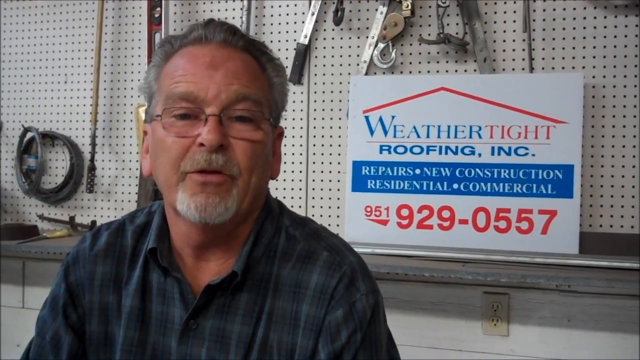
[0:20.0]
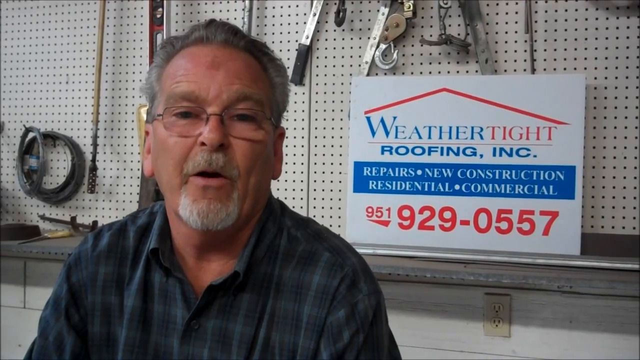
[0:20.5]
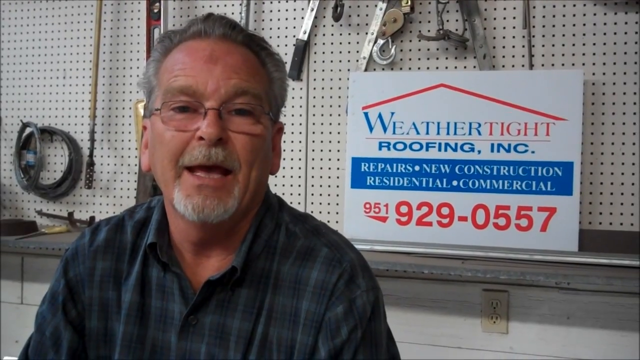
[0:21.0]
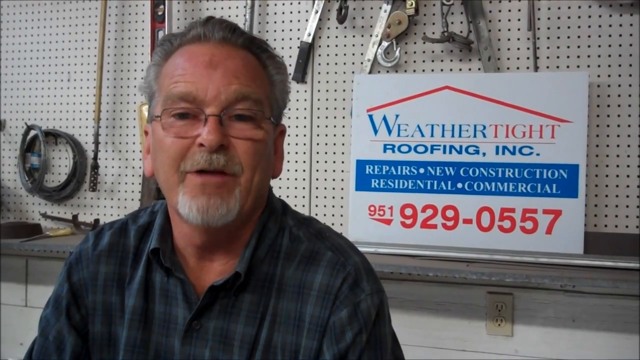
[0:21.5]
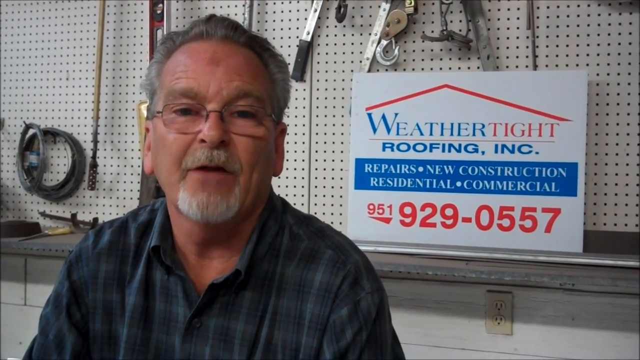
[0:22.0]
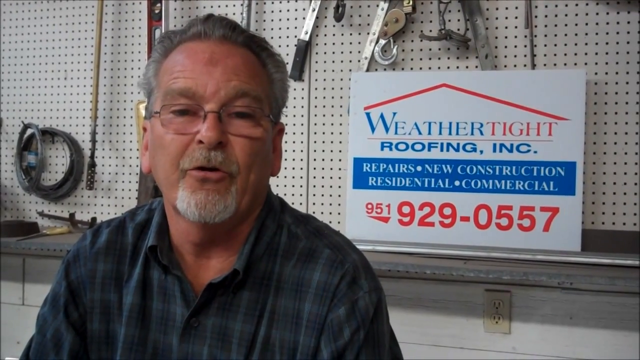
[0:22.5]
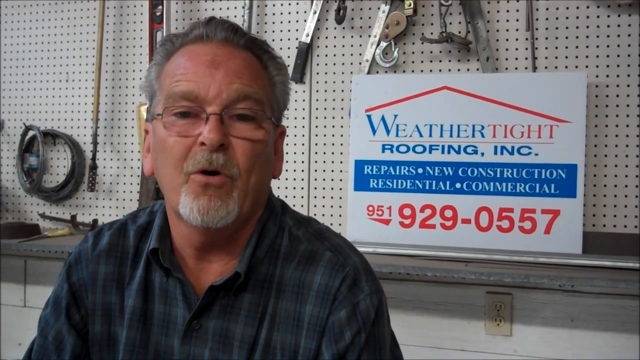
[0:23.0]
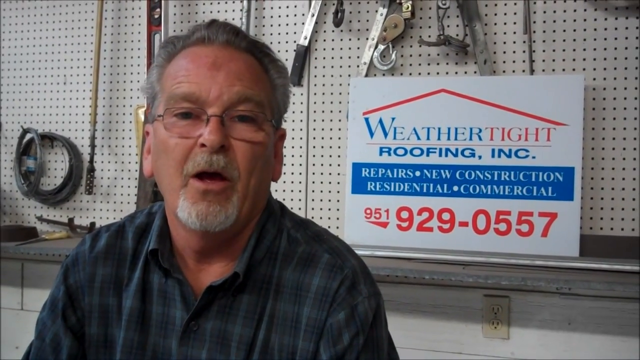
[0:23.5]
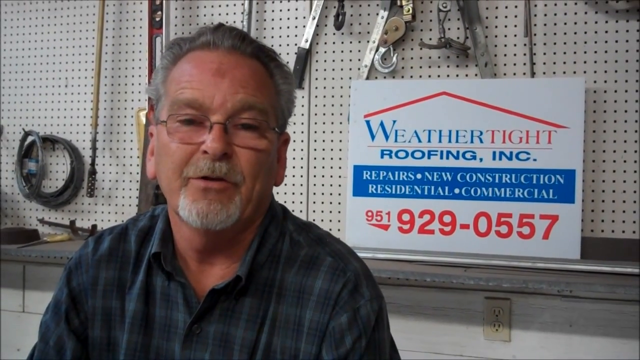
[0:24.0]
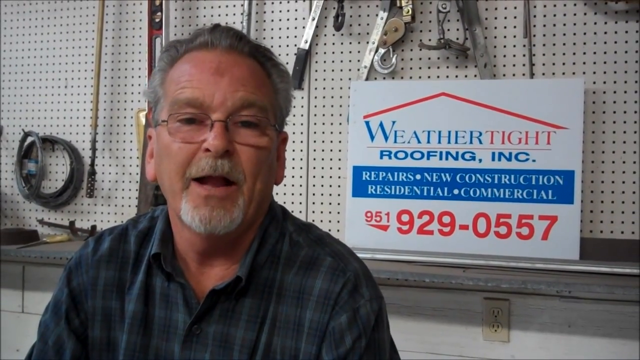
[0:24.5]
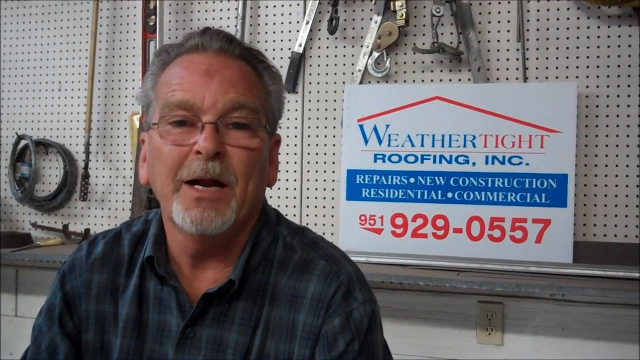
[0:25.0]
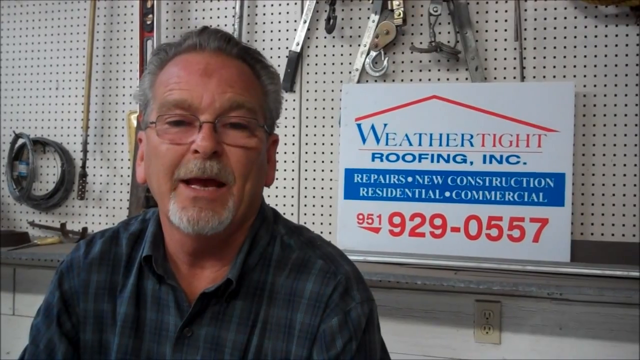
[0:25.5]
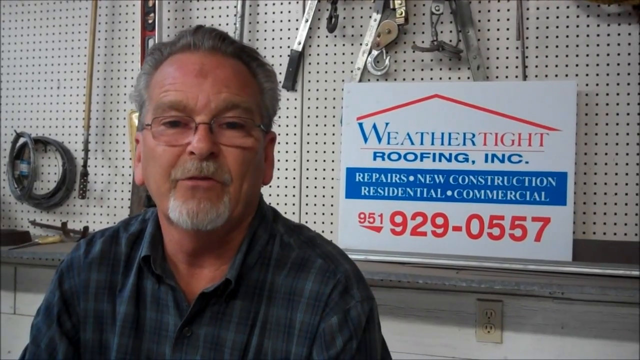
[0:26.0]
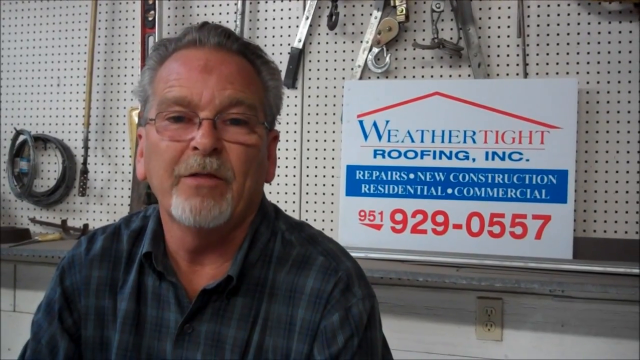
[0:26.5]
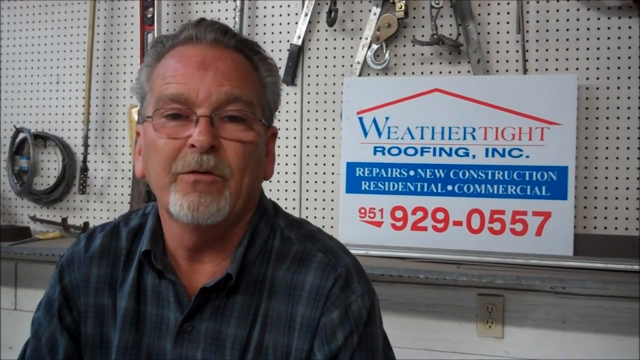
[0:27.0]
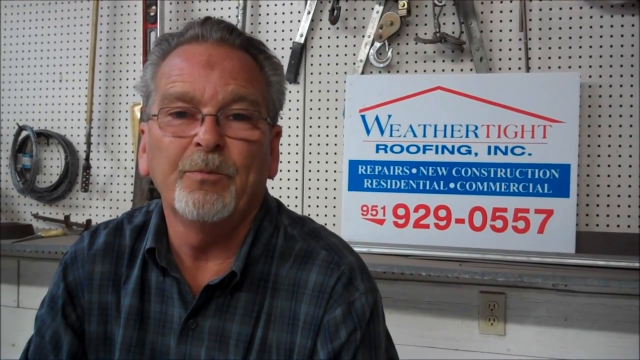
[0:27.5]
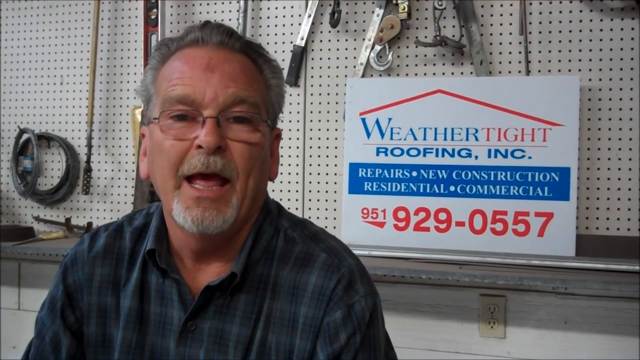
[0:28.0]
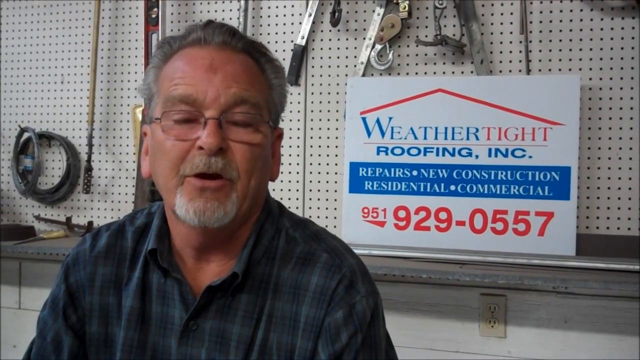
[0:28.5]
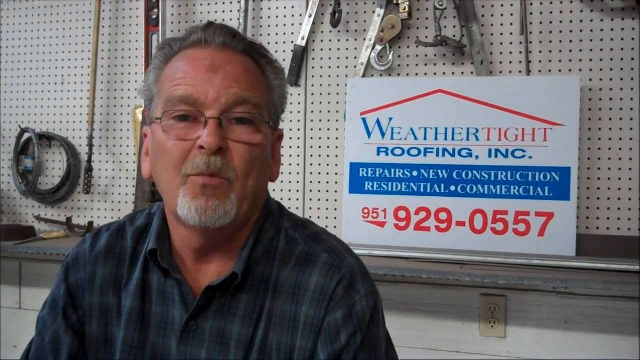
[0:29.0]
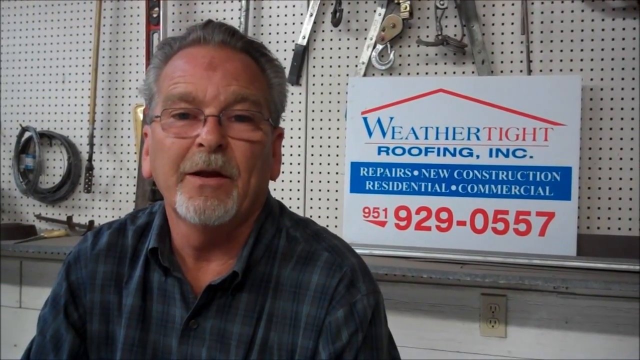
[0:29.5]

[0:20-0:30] The gentleman speaks to the camera, and more of the background and its objects are visible. His mouth moves and he blinks, with very little movement from the shoulders down. His shirt has a V collar with a V area in the front, and the collar is turned down in multiple places, with wrinkles in the shirt. His mouth moves upward. His head moves only slightly to the left, and he brings it back straight toward the front. On the right side of the backdrop is the sign advertising weathertight roofing: the phone number is in red, the sign's background is white, and the words for weather and roofing are in blue lettering.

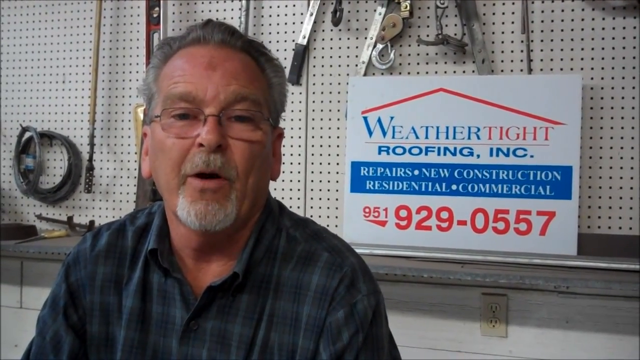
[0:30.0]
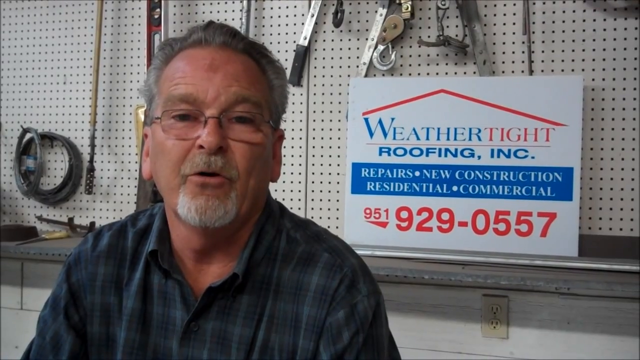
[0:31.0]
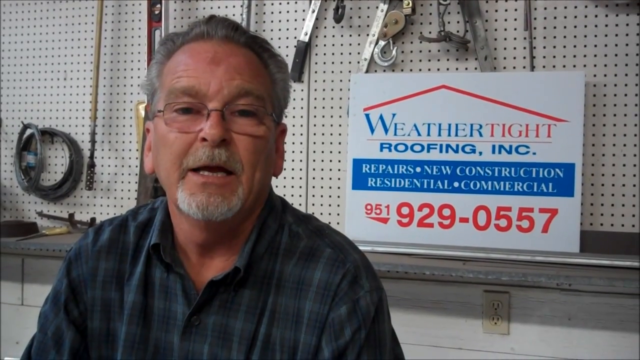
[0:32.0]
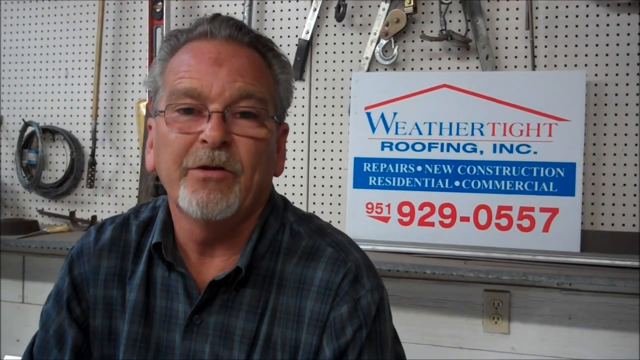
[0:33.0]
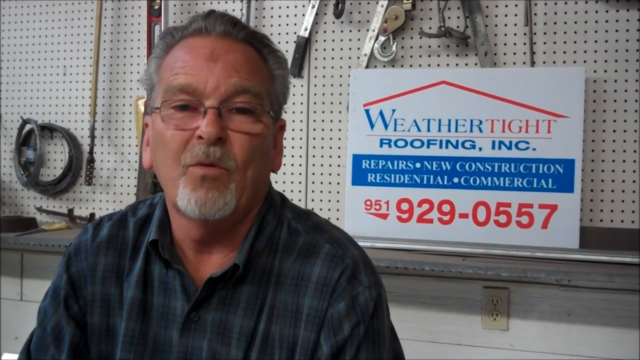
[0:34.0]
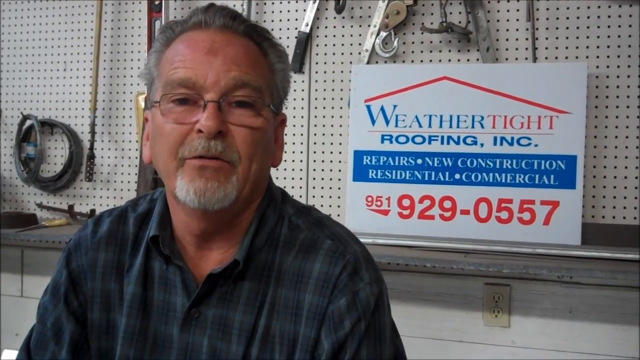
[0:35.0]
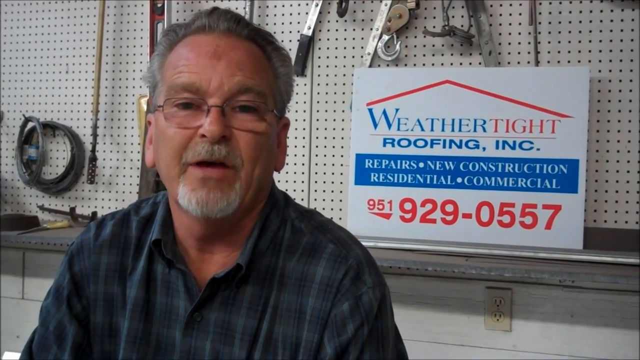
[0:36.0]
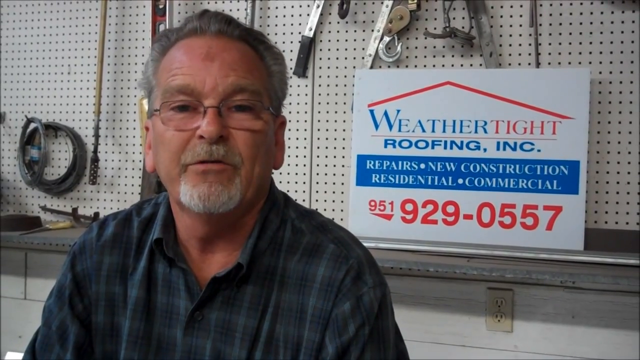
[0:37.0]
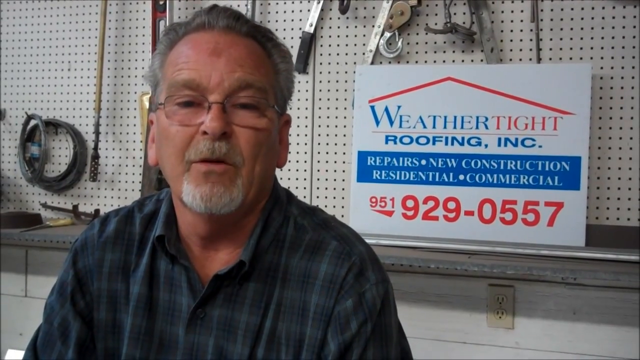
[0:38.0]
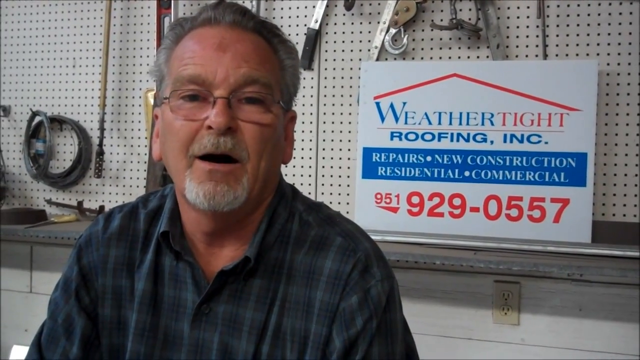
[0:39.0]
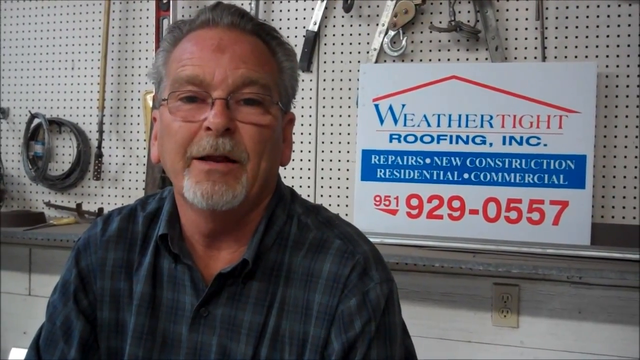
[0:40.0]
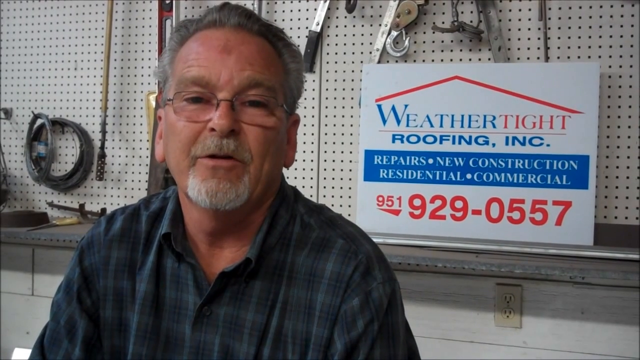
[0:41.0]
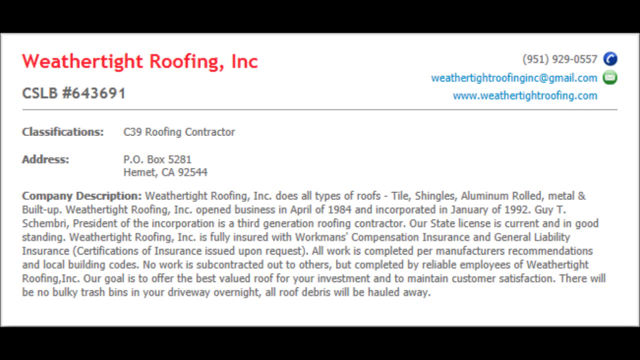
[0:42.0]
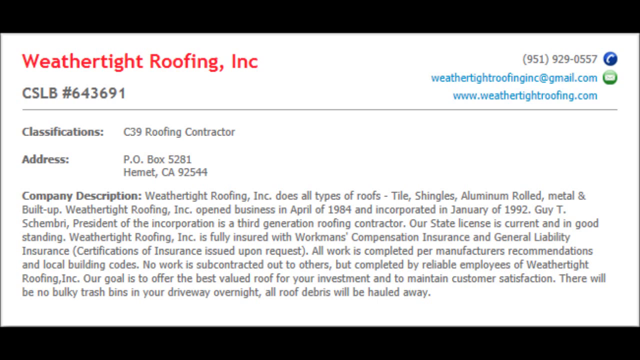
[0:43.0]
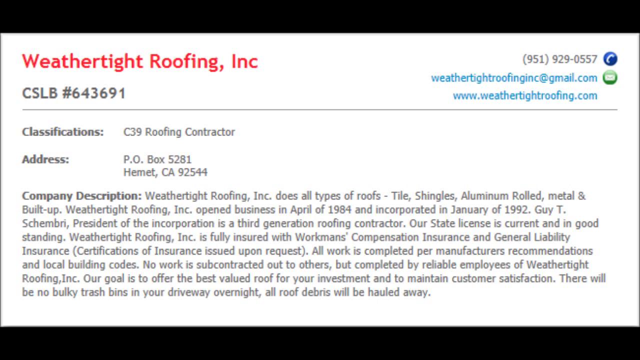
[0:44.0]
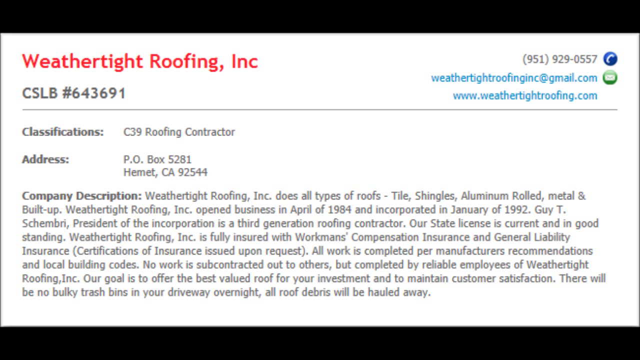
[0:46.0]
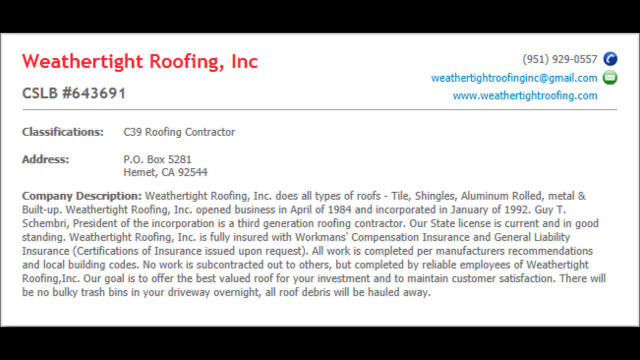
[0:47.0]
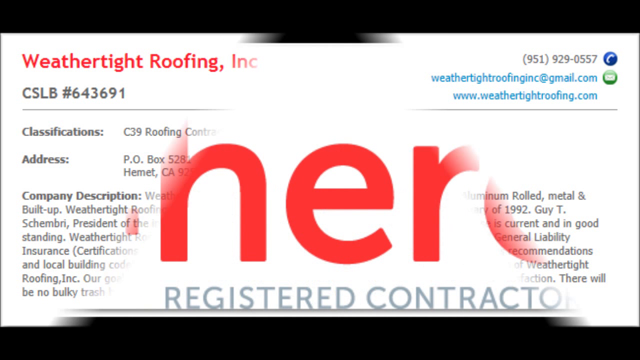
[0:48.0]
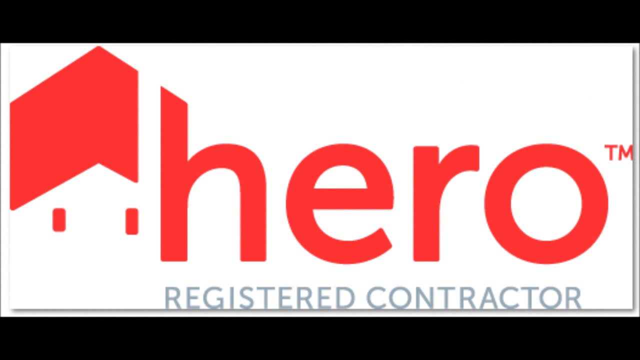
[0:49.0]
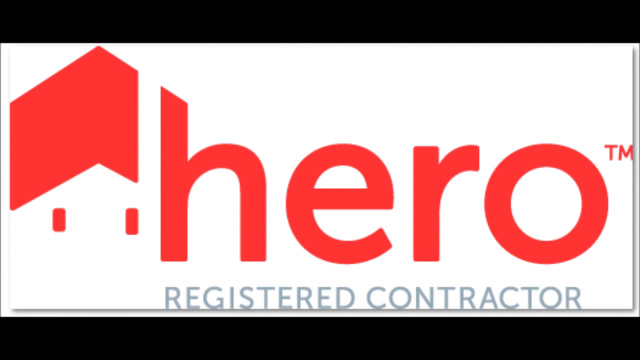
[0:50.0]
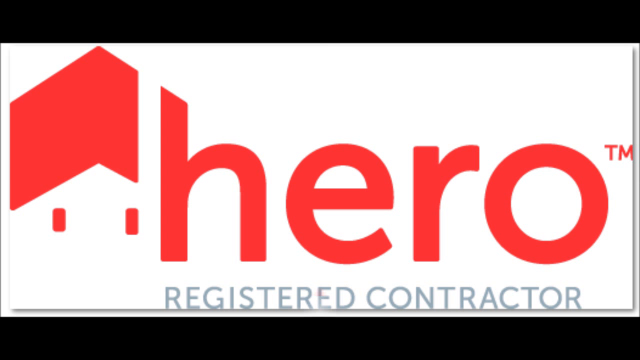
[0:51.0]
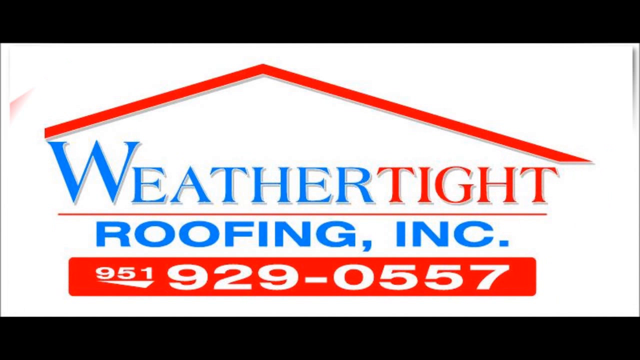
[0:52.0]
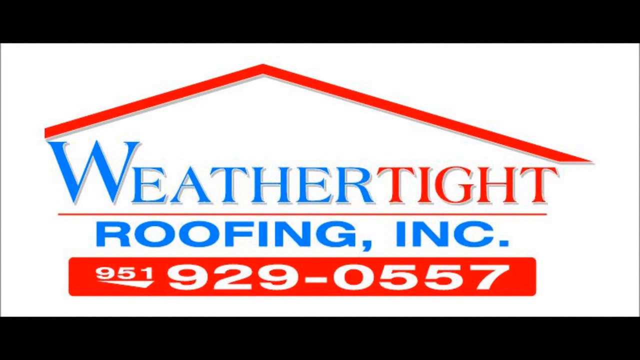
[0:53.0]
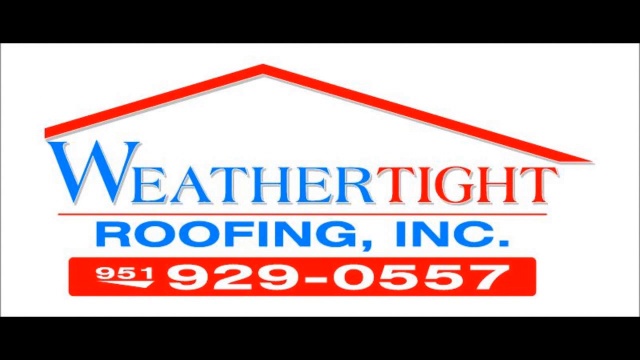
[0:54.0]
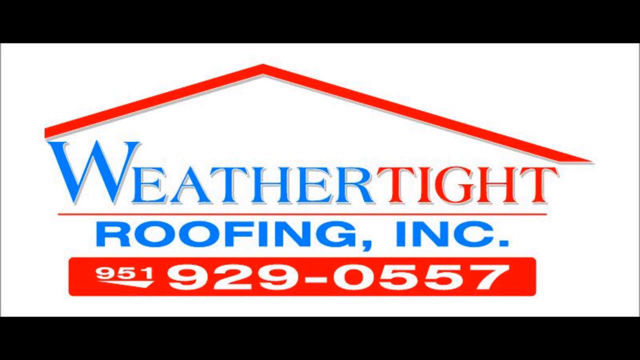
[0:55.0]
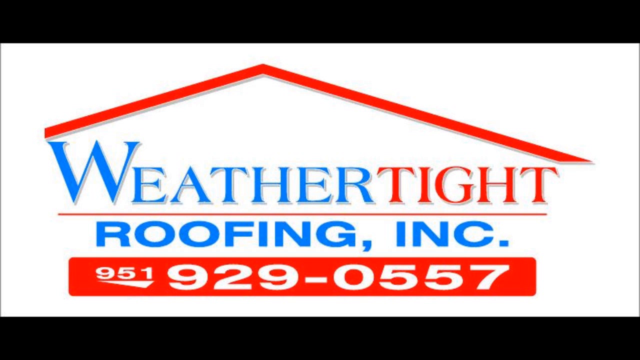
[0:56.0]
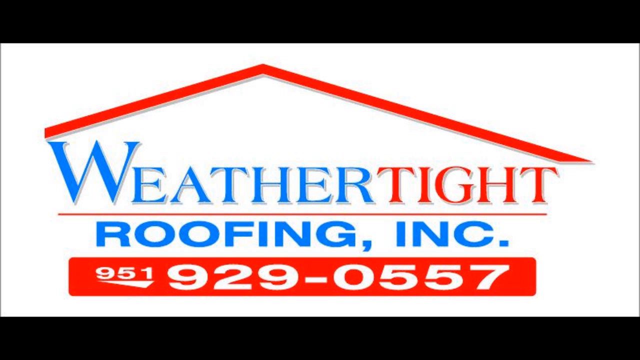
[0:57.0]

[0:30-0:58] A rectangular page shows a written letter. In the upper left corner it reads "weathertight roofing, INC", and below that "CSLV # 643-691". To the right of that, in black letters, is the phone number "951 (929-0557)", followed by a round blue icon. Below that is the email, weathertightroofing at gmail.com, and the website "www.weathertightroofing.com", both in blue. The page lists the classification "C-39 roofing contractor" and the address "PO Box 5281, Hemet, California, 92544". A company description states that the company does all types of roofs, including tile, shingles, aluminum, rolled metal and built up; that it opened for business in April of 1984 and was incorporated in January of 1992; and that "Guy T. Schmidt" is president and a third generation roofing contractor. The text continues: "Our state license is current and in good standing," the company is fully insured with workman's comp insurance and general liability insurance, and "Certifications of insurance issued upon request." It also states "All work is completed per manufacturer's recommendations and local building codes," that no work is subcontracted out to others but completed by reliable employees, "Our goal is to offer the best valued roof for your investment and to maintain customer satisfaction," "There will be no junky trash bins in your driveway overnight," and "All roof debris is hauled away."